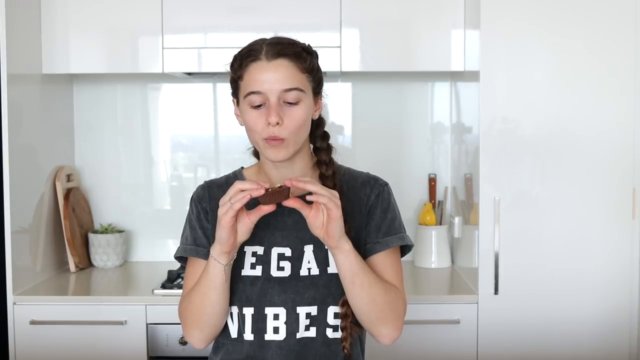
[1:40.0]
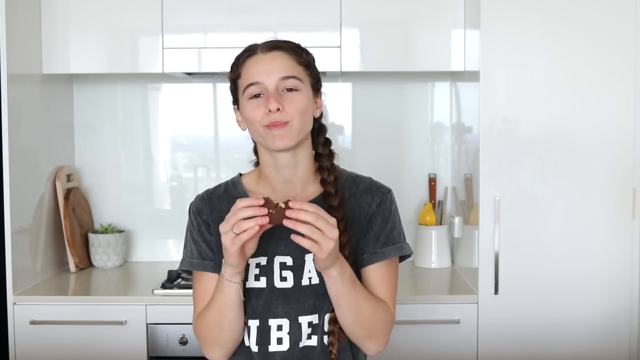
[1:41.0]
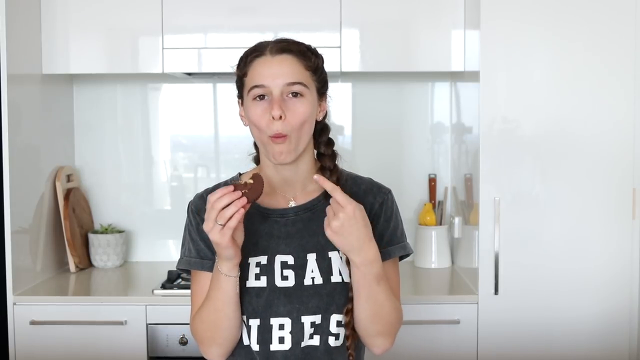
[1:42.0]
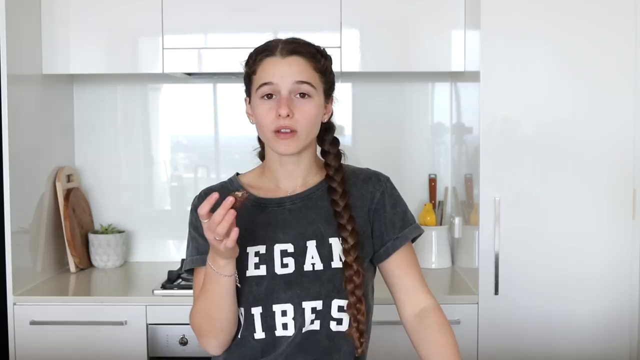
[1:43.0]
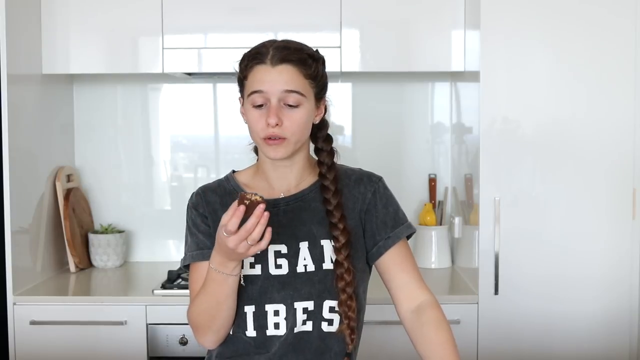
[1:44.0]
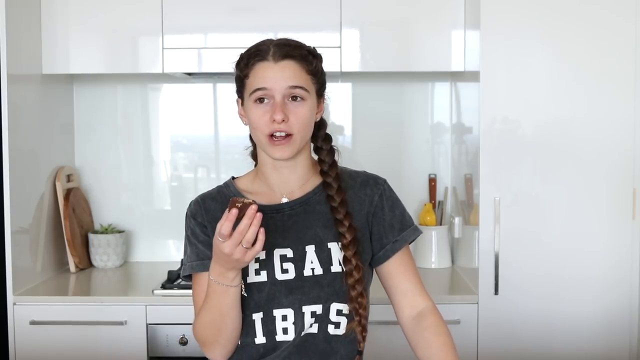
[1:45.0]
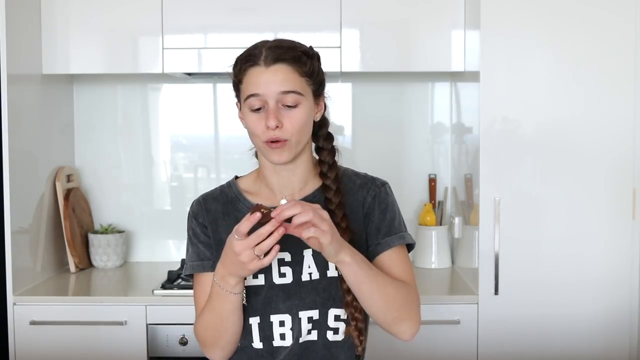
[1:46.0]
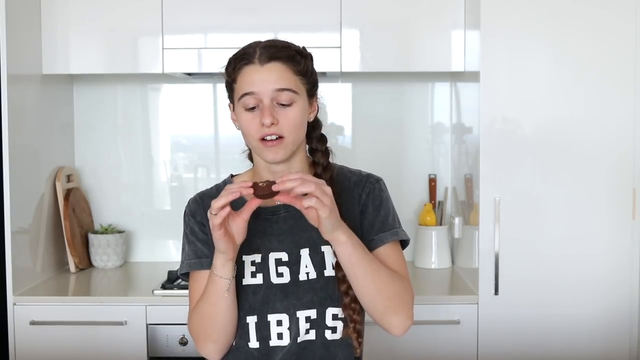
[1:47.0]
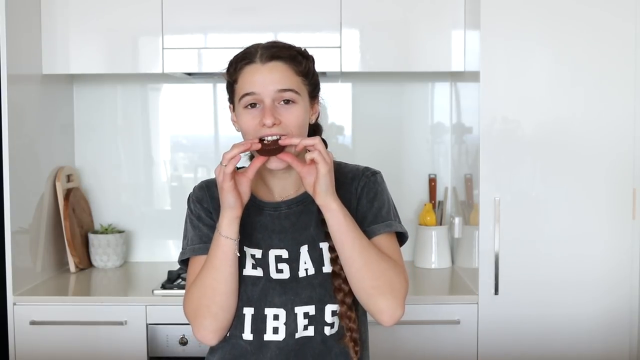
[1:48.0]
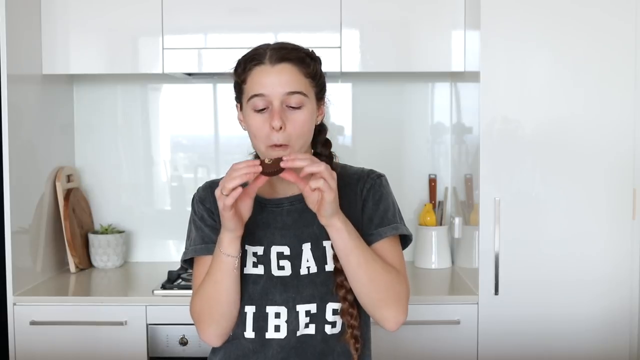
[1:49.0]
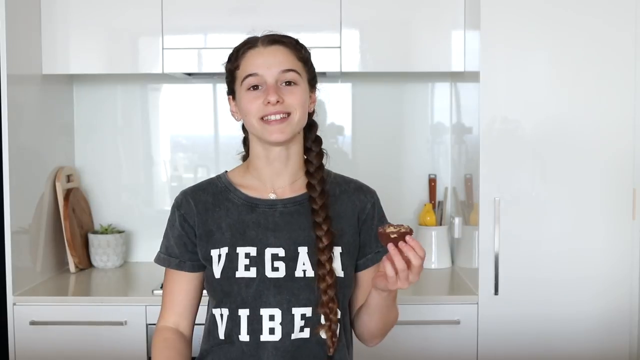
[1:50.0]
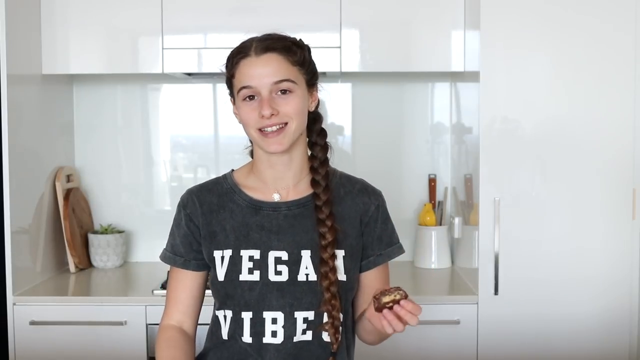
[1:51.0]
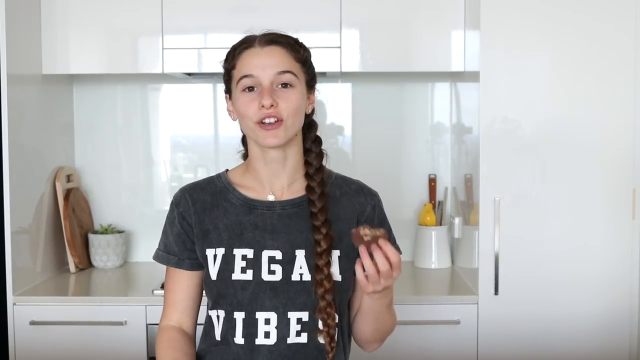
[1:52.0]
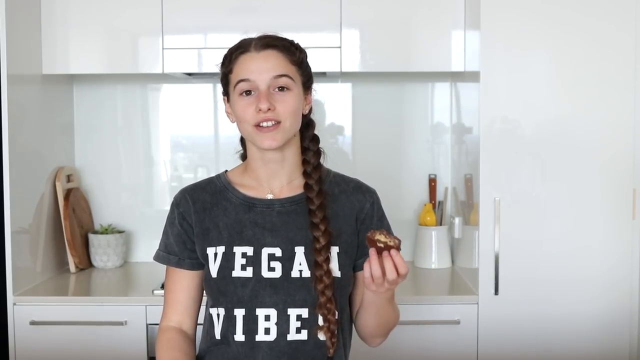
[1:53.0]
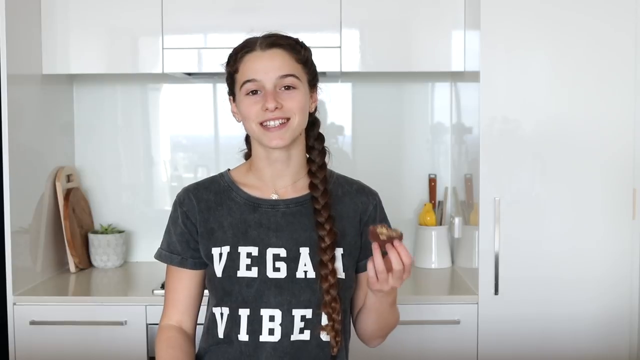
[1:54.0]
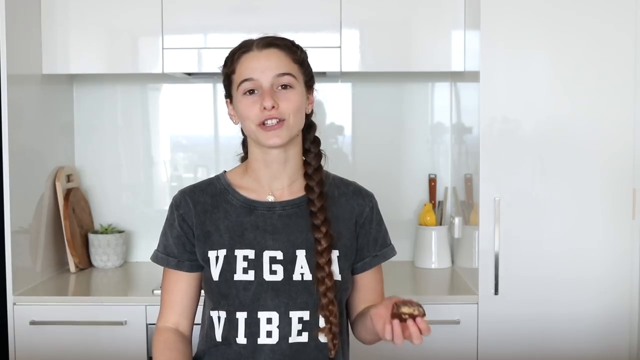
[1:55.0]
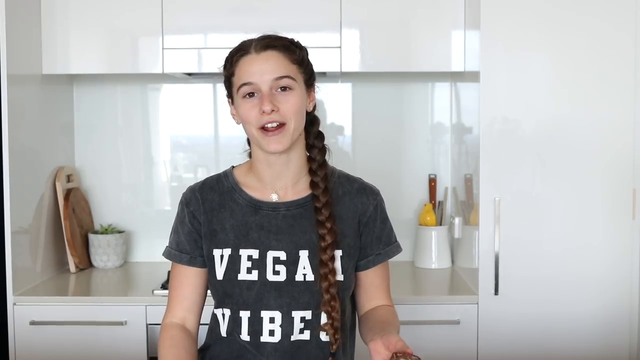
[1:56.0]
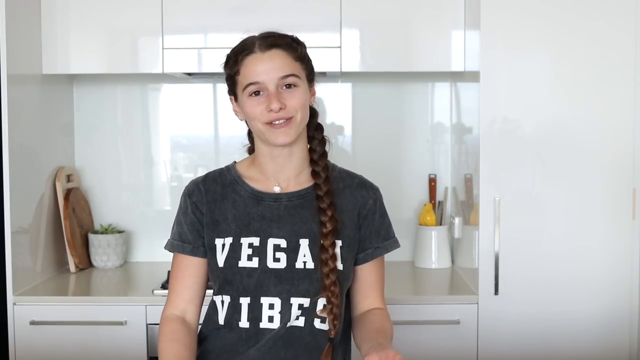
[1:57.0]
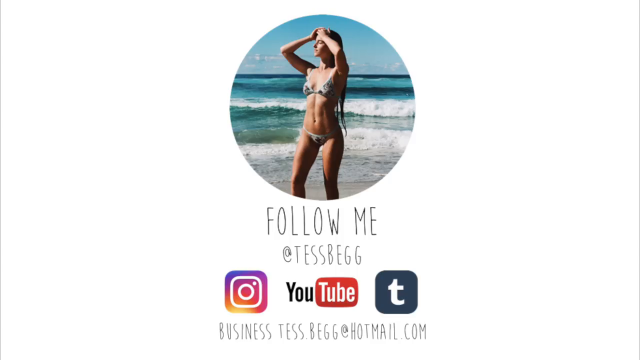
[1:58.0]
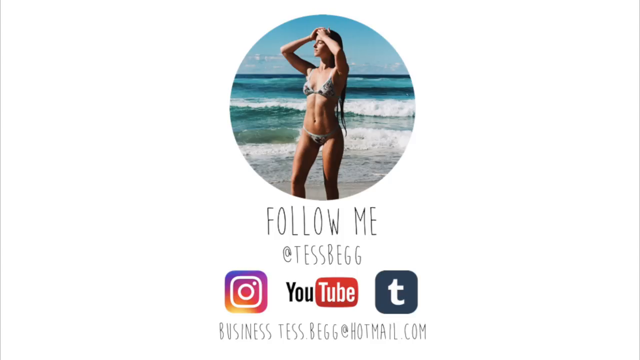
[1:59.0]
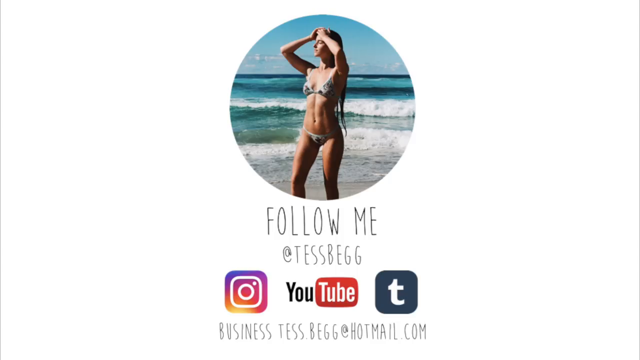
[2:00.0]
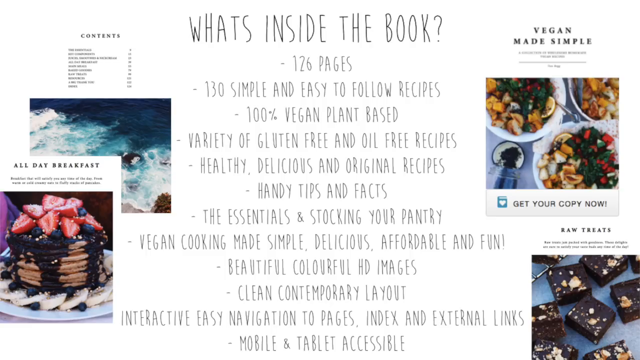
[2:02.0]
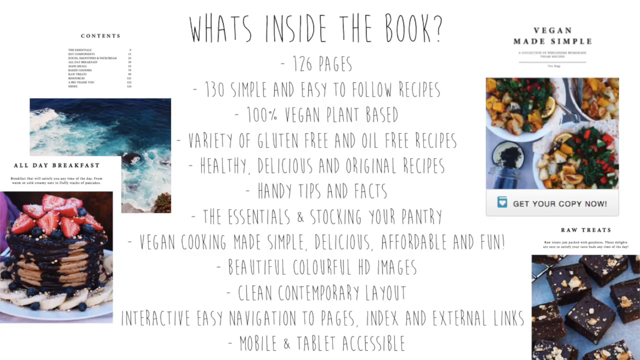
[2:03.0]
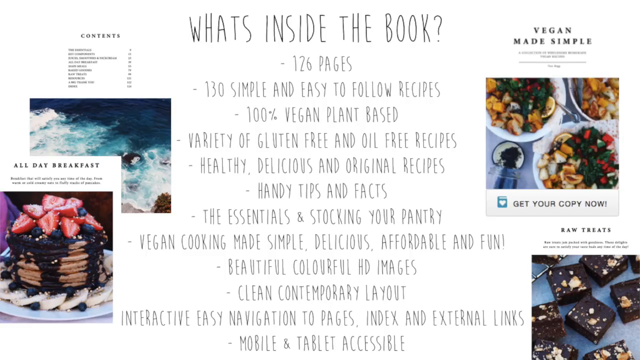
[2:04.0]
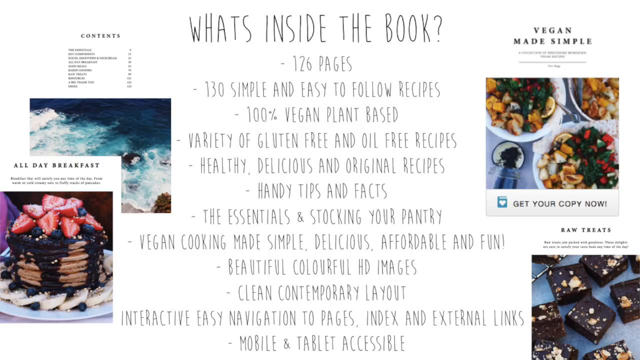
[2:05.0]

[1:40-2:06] The kitchen has entirely white cabinetry, and an open window behind shows city buildings faded out by a curtain on the window. An older white teenager with long black hair in a braid that reaches her stomach, over her left shoulder, wears a gray t-shirt with large white letters that say "vegan vibes". She eats a peanut butter cup she made herself, holding it with the fingers of both hands. She chews, looks at it, and makes an expression that it tastes very good. She takes her left hand off the cup, points at it, nods her head and closes her eyes, indicating it is satisfying. She keeps talking, moving her left hand around as she speaks, looking at the camera and then at the peanut butter cup. She takes another bite, holding it with the fingertips of both hands, then moves the peanut butter cup to her left hand and moves her arm up and down with it as she speaks to the camera. The final picture shows her standing on a beach with waves coming at her, her long hair past her waist in the back. Text says "follow me, Tess Begg", with icons for Instagram, YouTube, and Twitter.